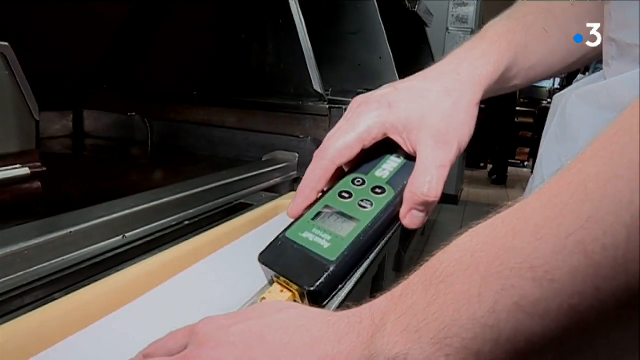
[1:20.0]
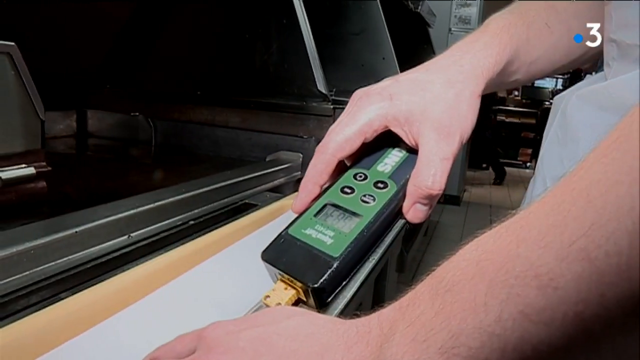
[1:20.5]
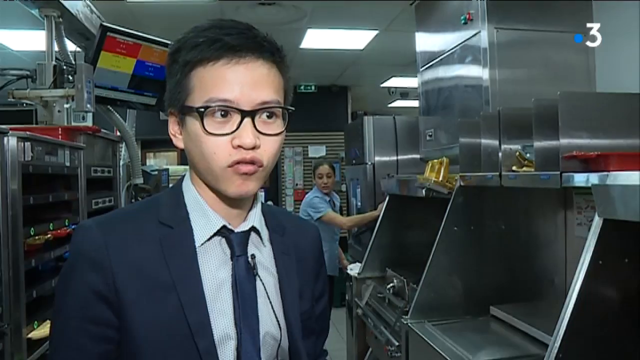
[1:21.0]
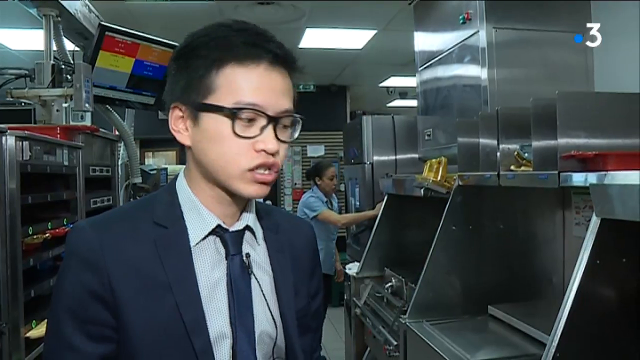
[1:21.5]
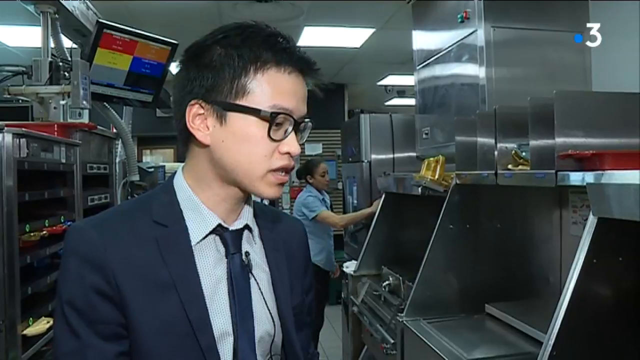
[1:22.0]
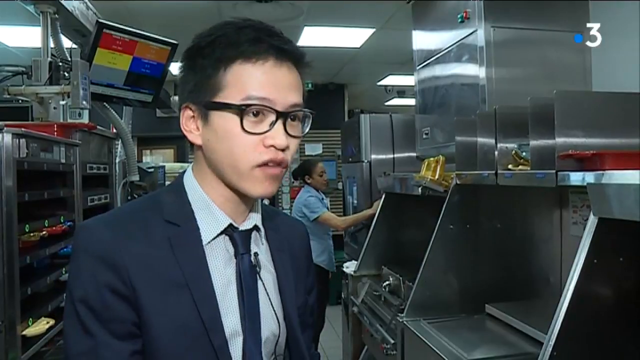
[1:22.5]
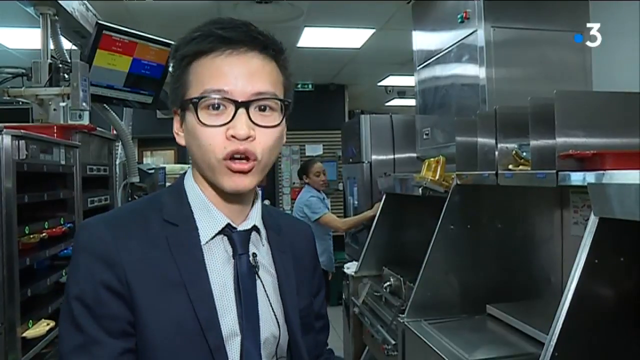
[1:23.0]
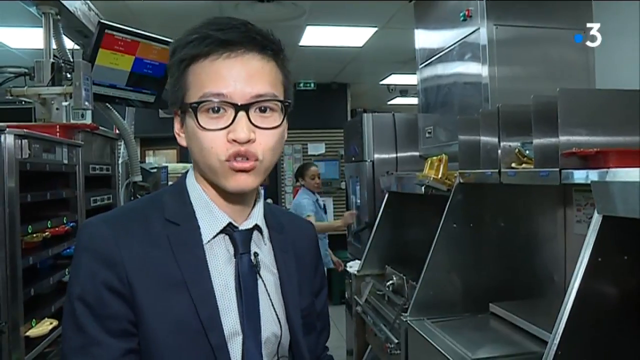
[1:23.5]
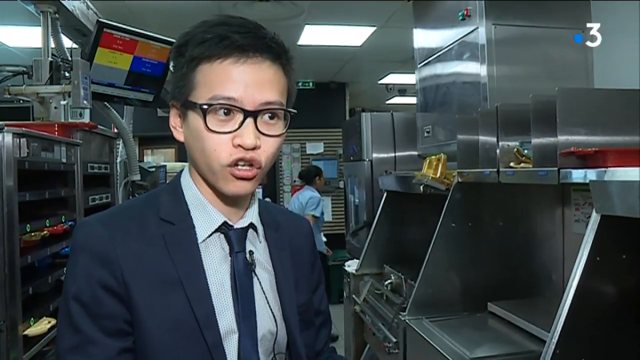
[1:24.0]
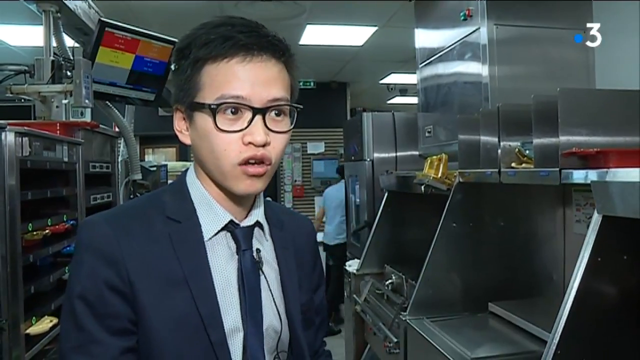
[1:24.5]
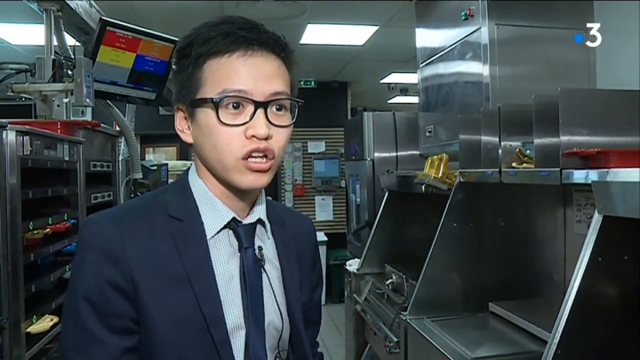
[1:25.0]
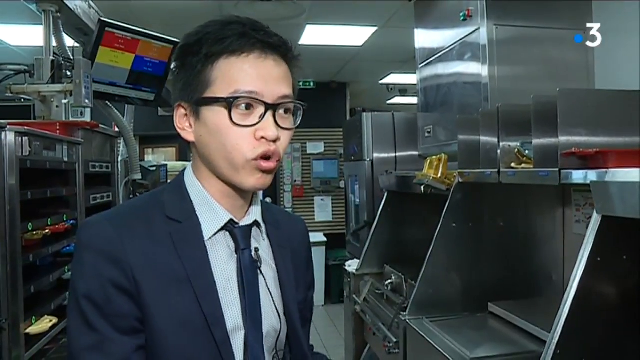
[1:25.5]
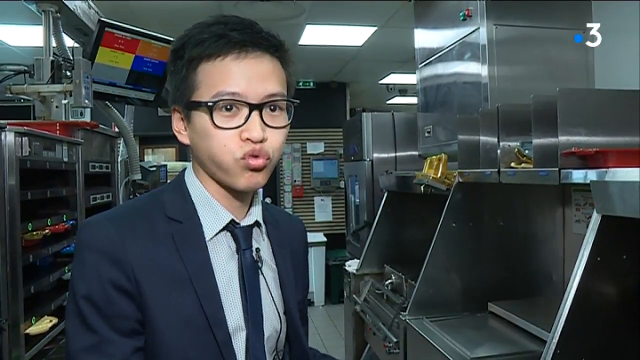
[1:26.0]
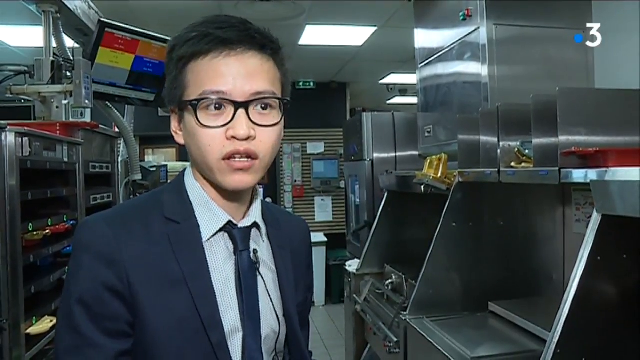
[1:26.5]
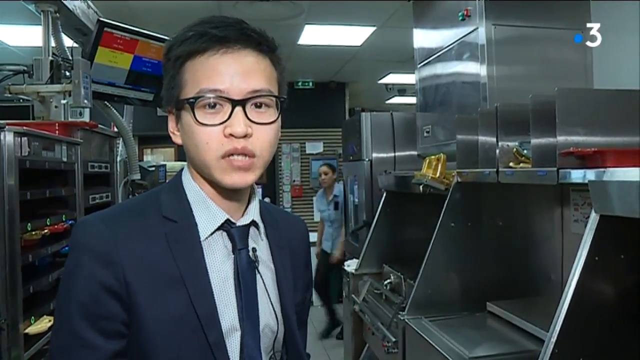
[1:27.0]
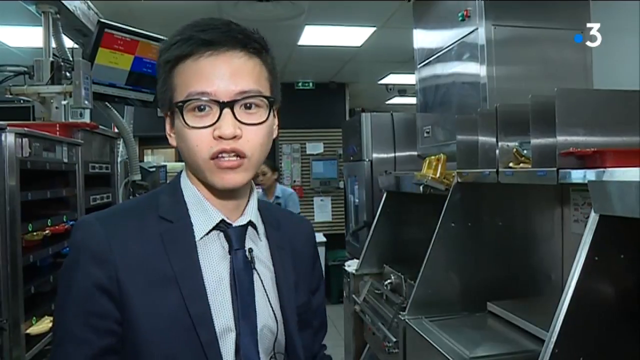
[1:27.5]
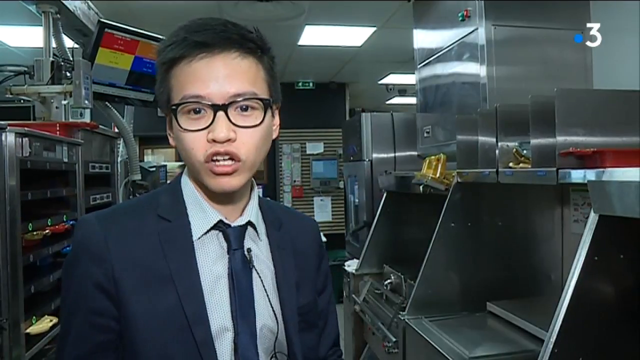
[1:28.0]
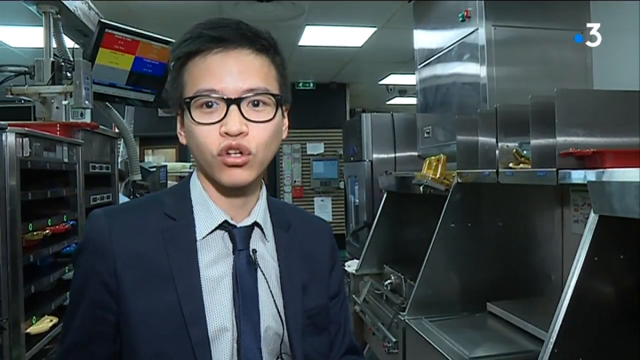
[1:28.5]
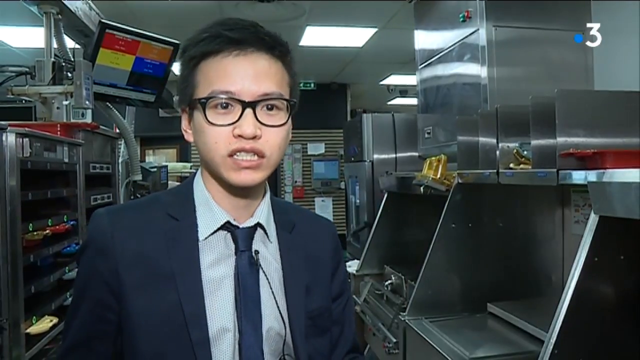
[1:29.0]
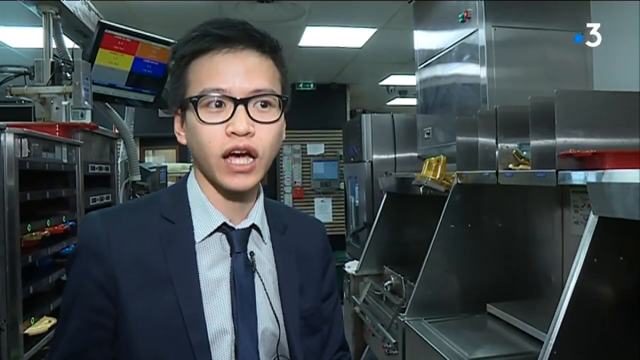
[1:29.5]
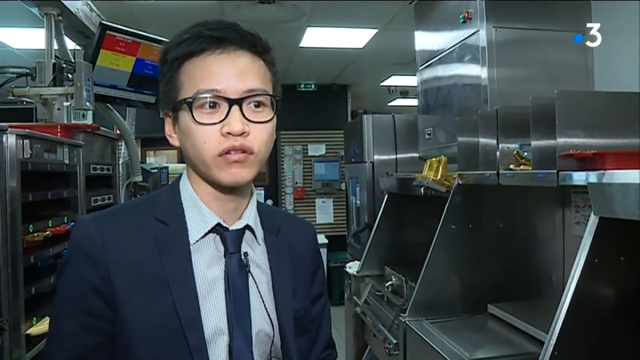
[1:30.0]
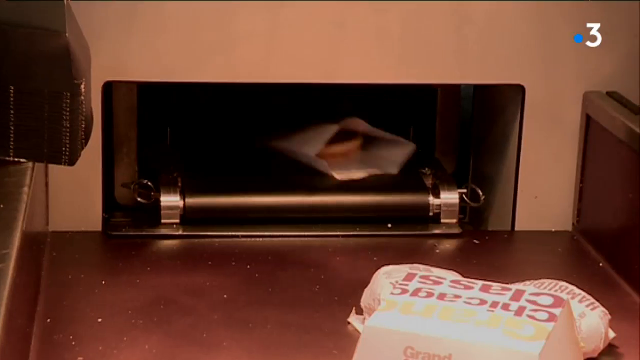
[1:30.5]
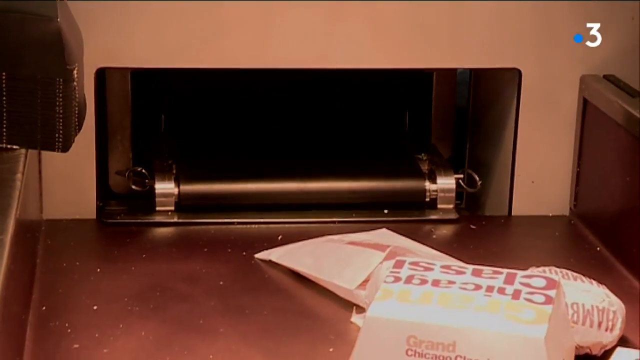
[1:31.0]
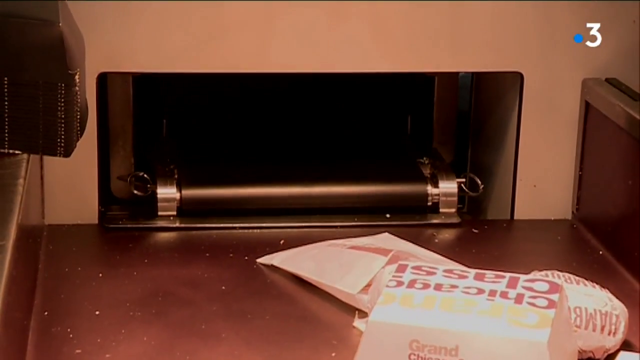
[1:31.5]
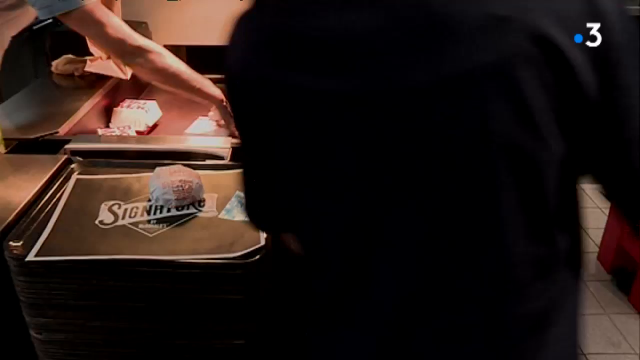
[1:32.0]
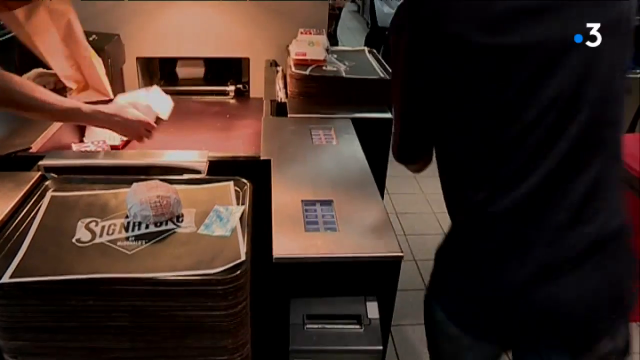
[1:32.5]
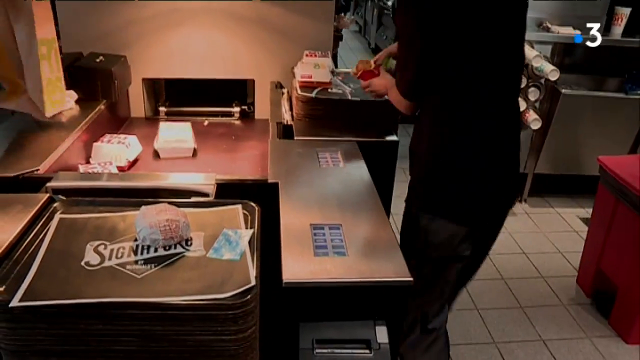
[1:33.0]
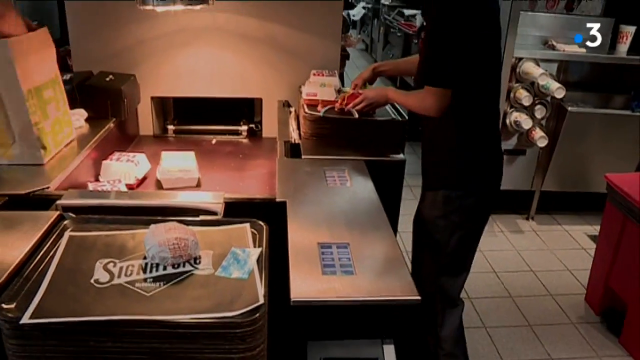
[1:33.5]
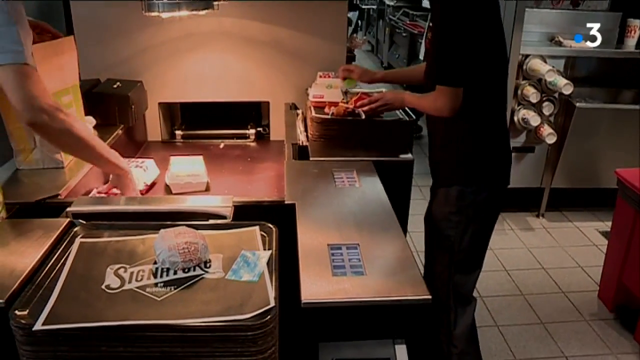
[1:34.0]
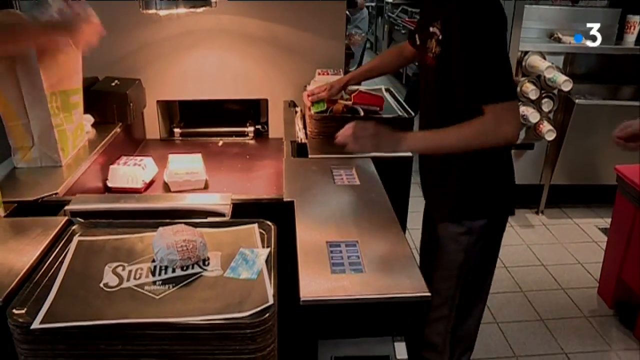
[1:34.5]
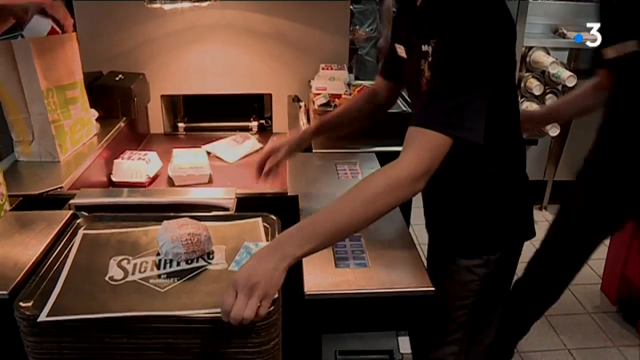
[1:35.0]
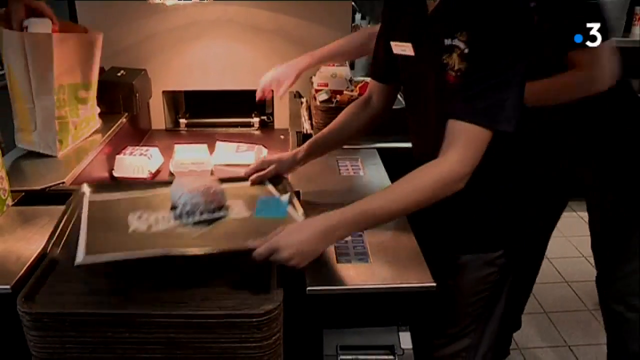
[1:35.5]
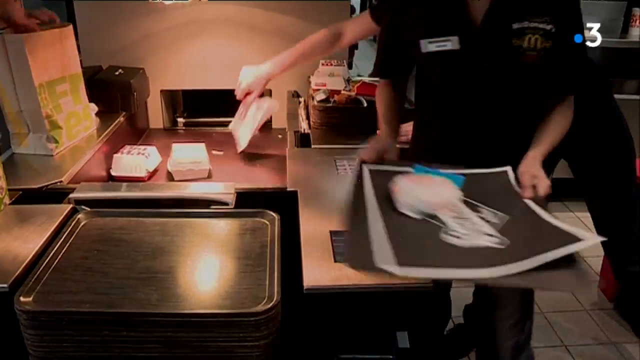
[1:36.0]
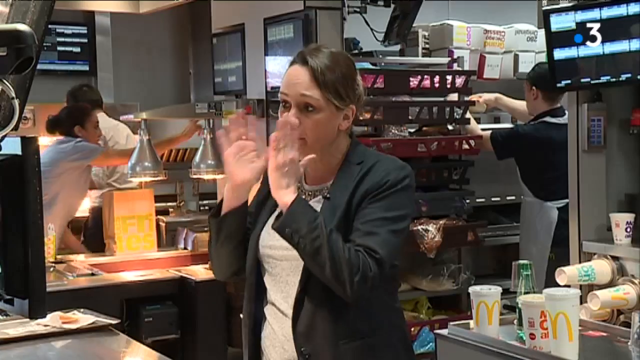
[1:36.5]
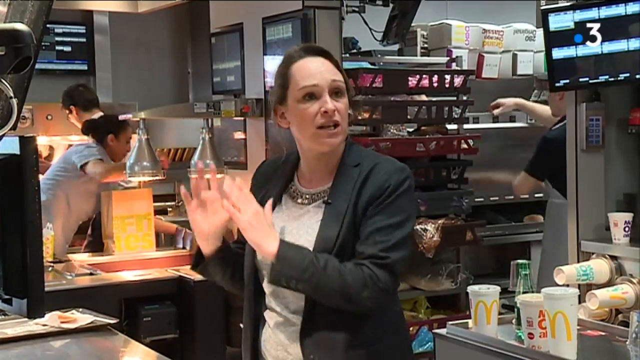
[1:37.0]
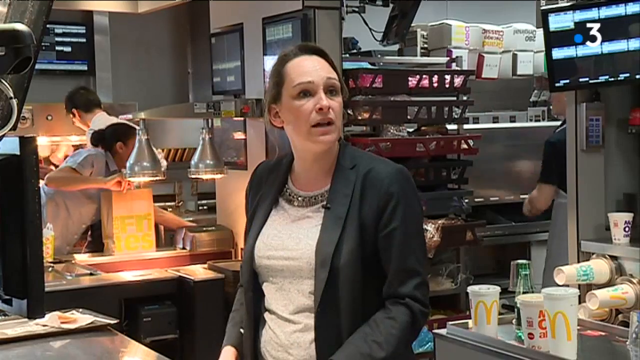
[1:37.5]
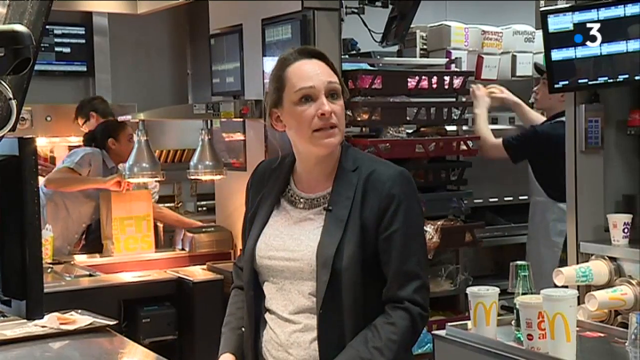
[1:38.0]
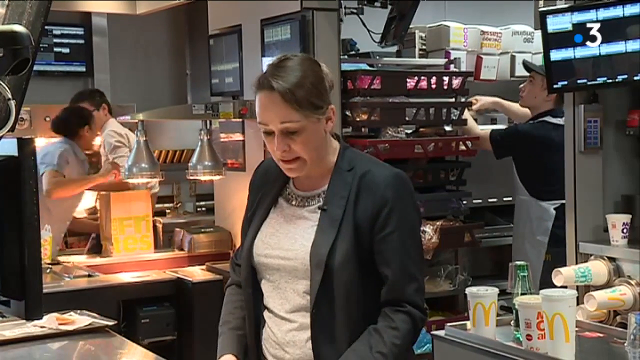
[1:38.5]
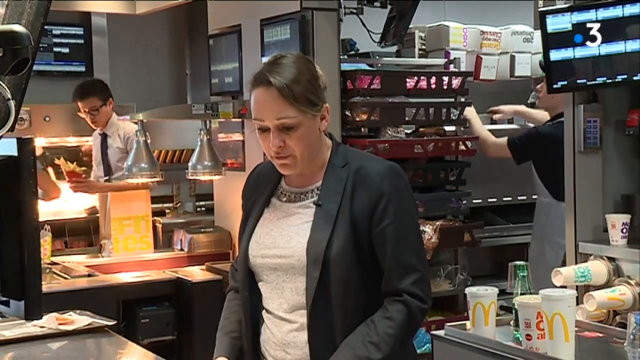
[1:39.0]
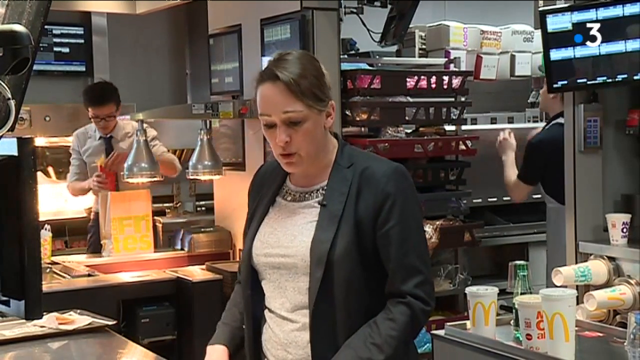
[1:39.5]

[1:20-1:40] A close-up shows a man in a dark blue jacket and tie, with a microphone attached to his tie, speaking in a McDonald's kitchen. He has short black hair and wears glasses. Behind him is kitchen equipment, and just above him to the left of the screen is a screen that presumably shows orders being taken in the restaurant. He looks at the camera and keeps talking while people move behind him, one of them visible in a short-sleeved light blue shirt. A close-up of one of the kitchen appliances follows: a tray that says "signature" is in the center of the screen with a hamburger on it. Food appears to be coming out of a conveyor belt from the appliance in the background and being placed on trays to serve customers; people in black McDonald's shirts pick up the trays and put the food from the conveyor belt onto them. The video then switches to a woman in a gray jacket and white shirt standing in the McDonald's and beginning to speak.